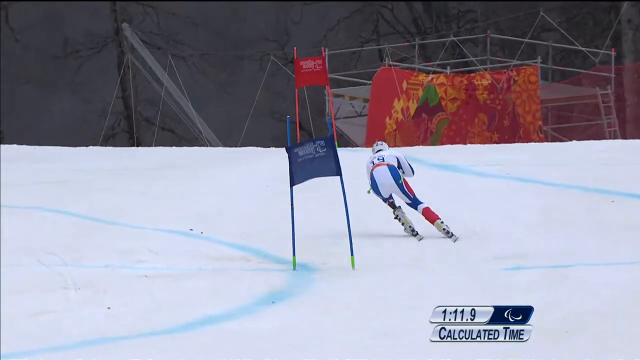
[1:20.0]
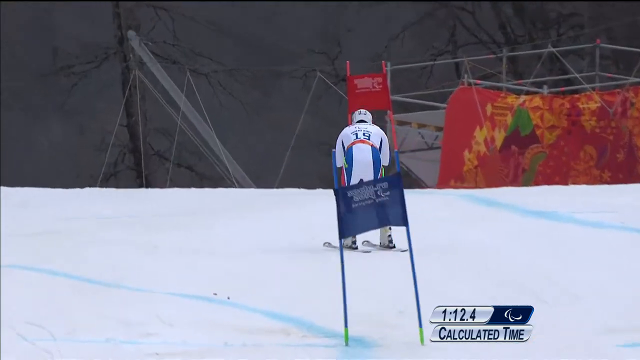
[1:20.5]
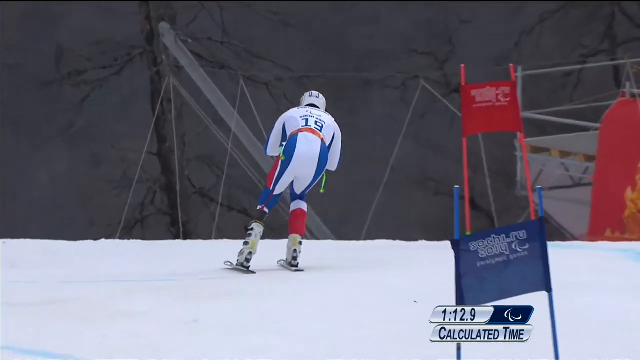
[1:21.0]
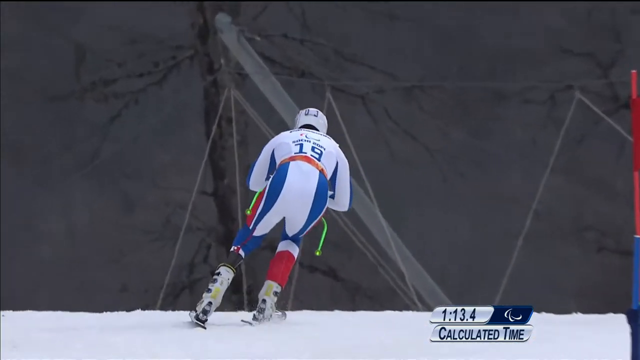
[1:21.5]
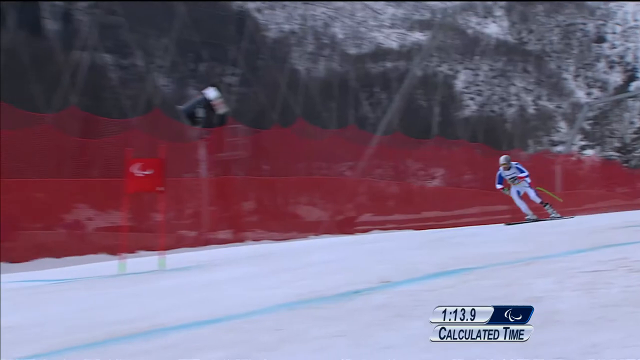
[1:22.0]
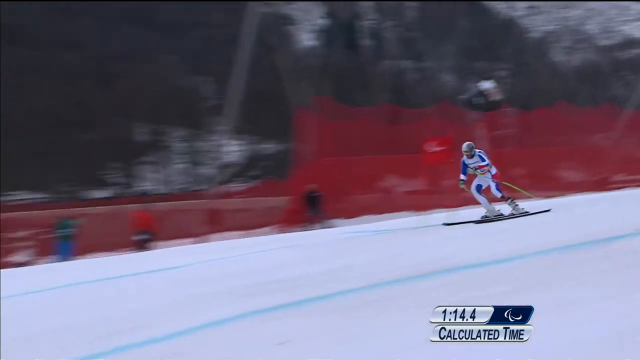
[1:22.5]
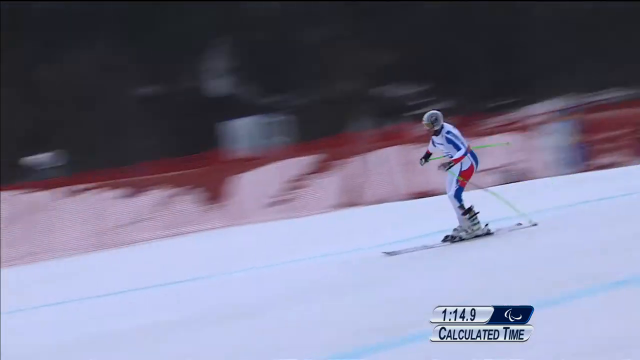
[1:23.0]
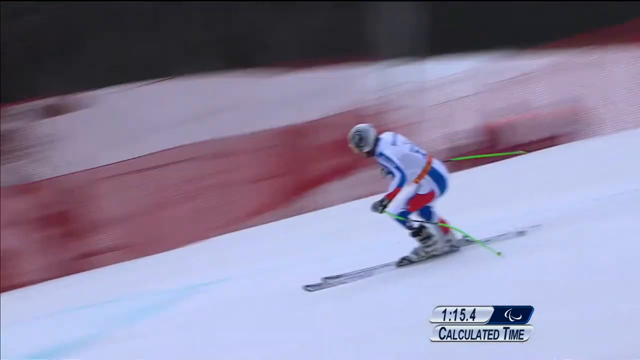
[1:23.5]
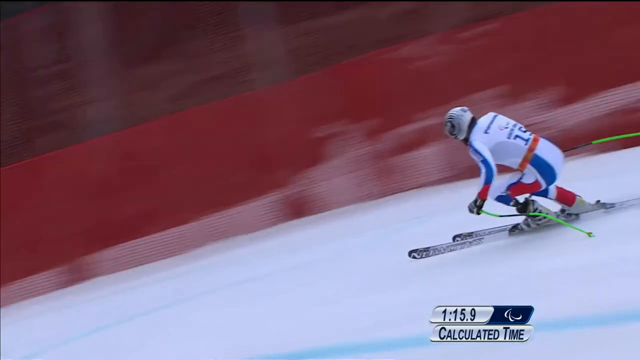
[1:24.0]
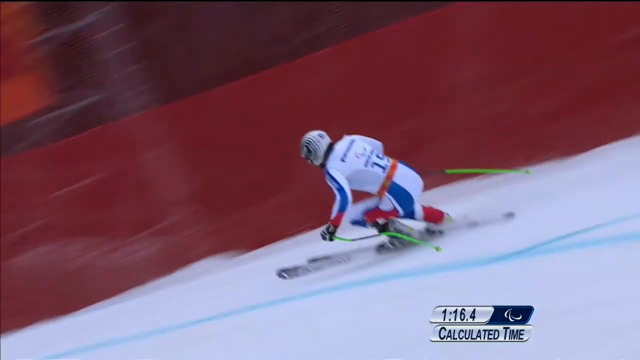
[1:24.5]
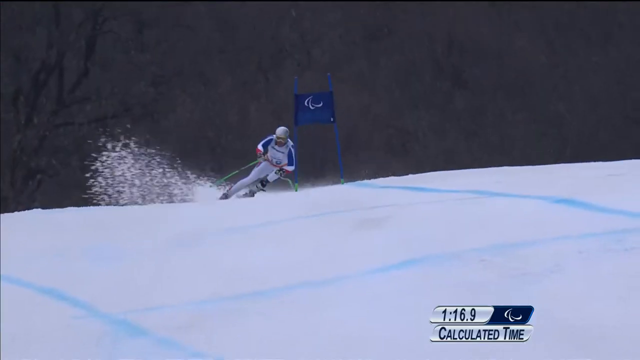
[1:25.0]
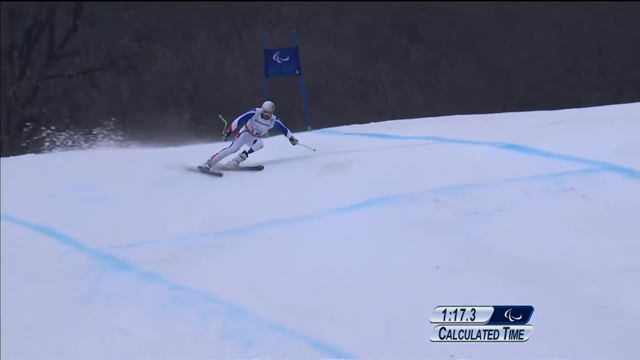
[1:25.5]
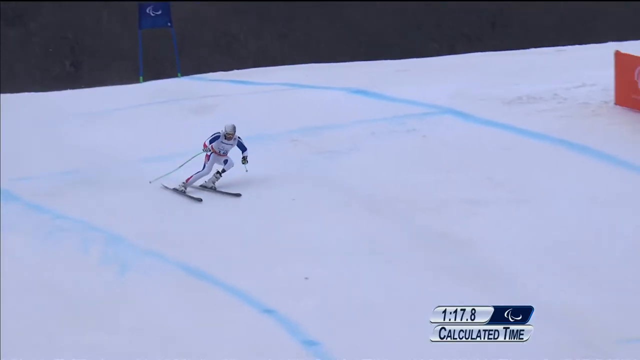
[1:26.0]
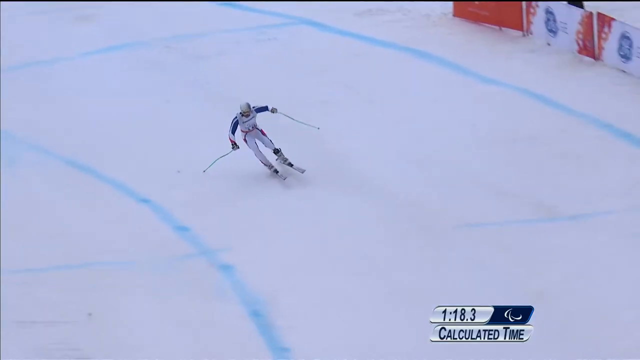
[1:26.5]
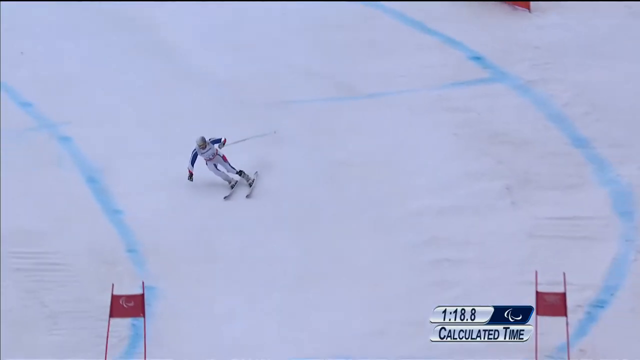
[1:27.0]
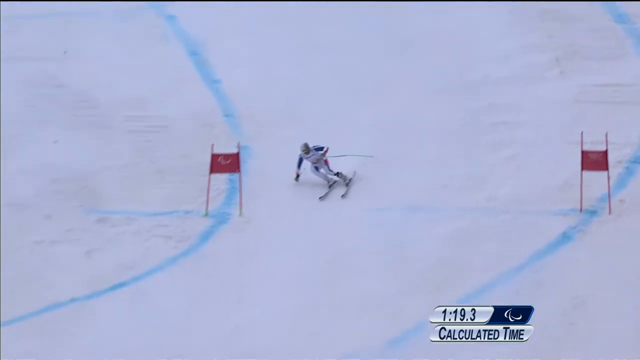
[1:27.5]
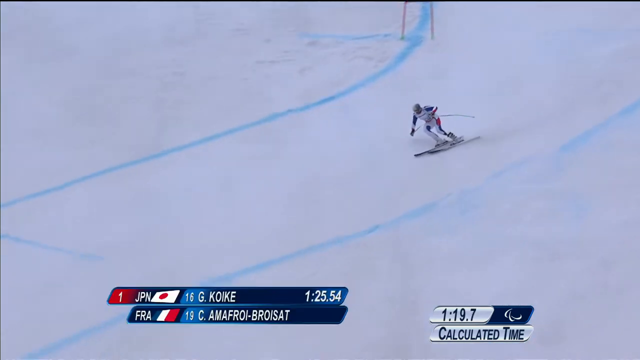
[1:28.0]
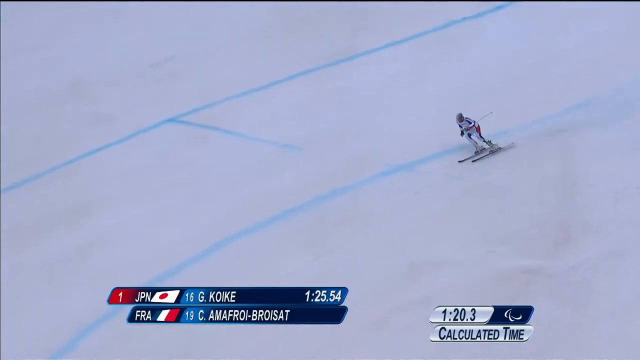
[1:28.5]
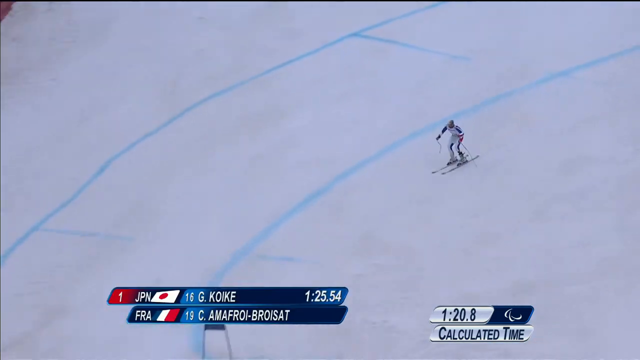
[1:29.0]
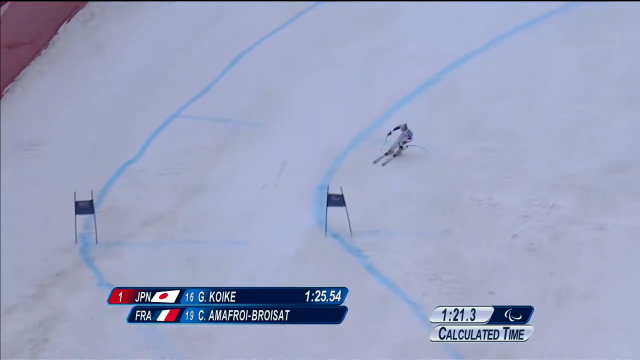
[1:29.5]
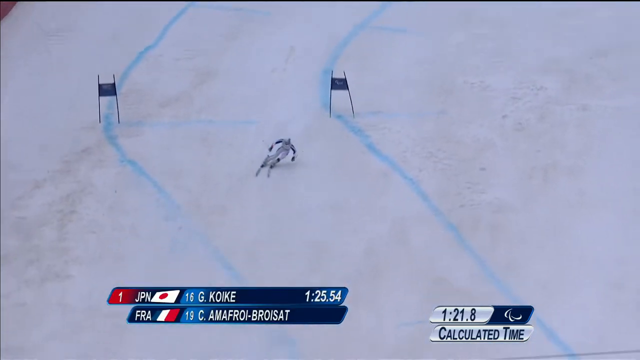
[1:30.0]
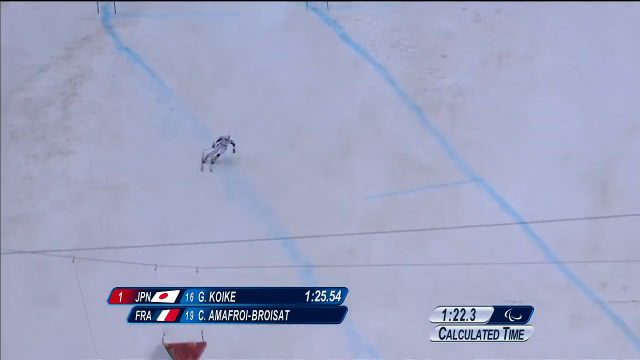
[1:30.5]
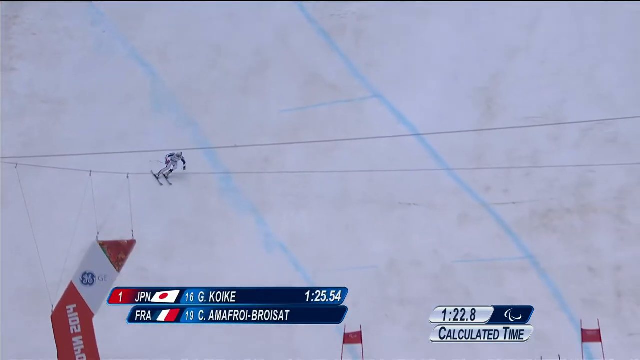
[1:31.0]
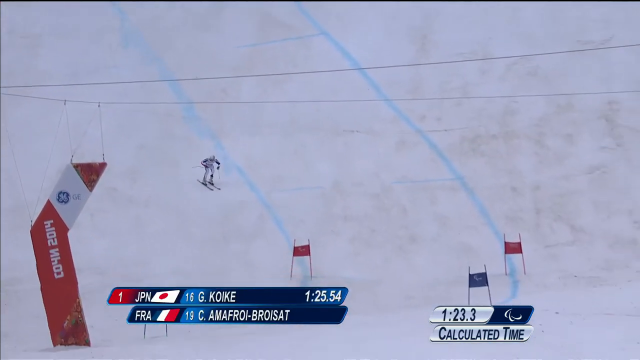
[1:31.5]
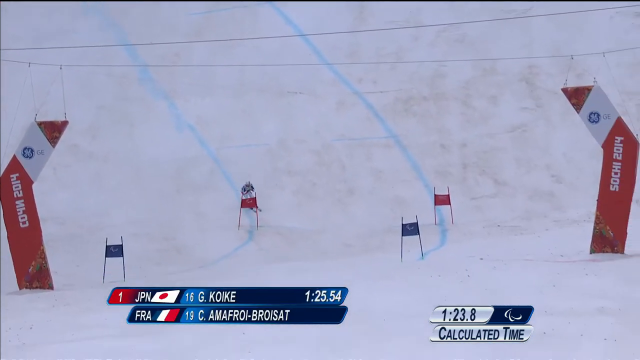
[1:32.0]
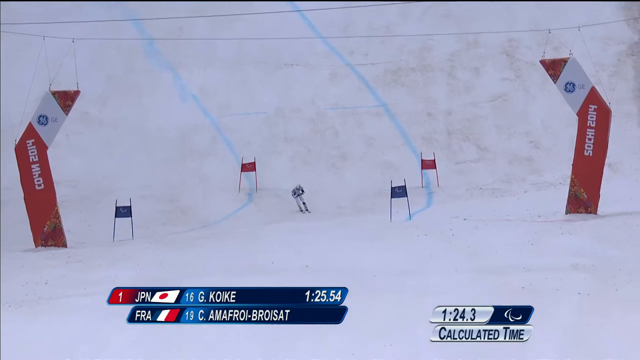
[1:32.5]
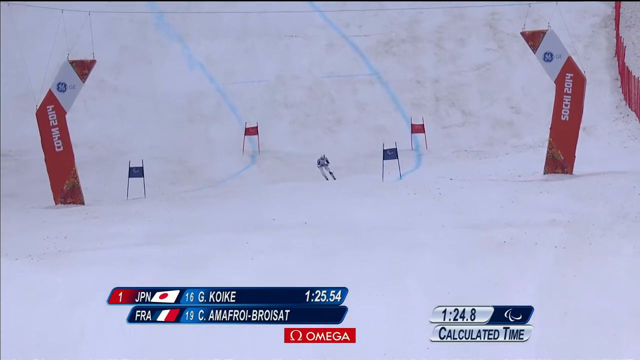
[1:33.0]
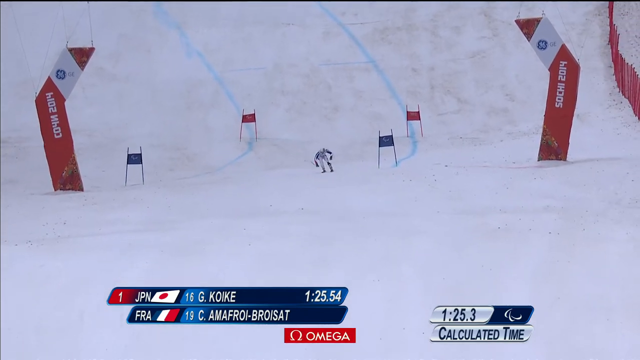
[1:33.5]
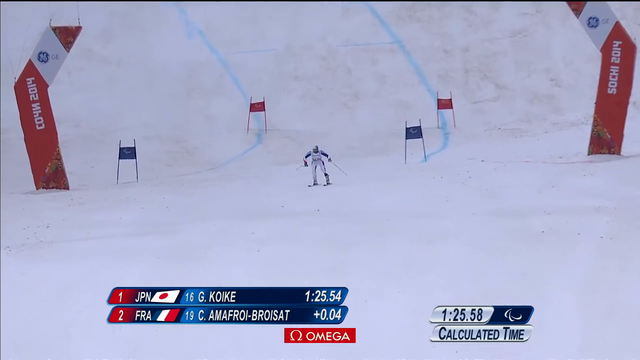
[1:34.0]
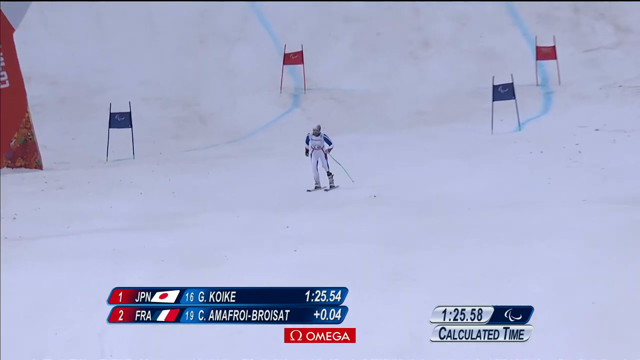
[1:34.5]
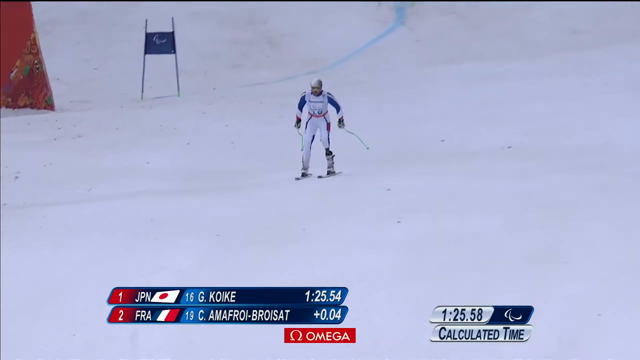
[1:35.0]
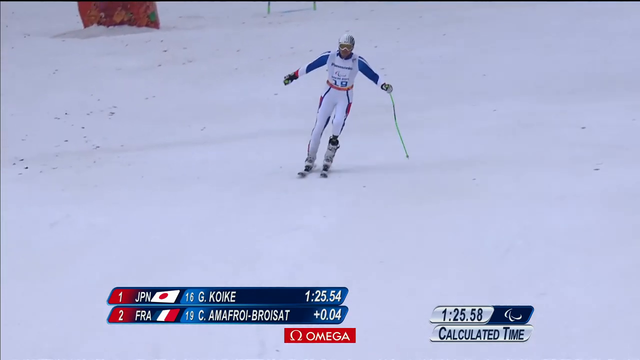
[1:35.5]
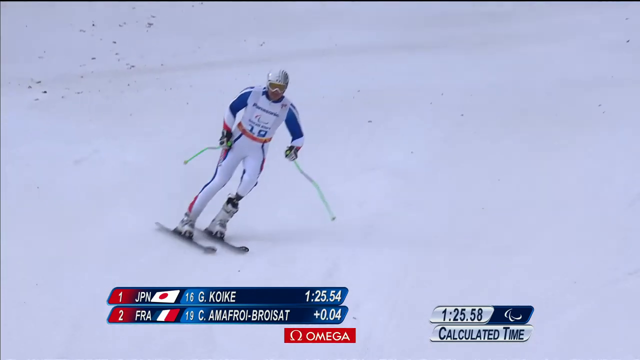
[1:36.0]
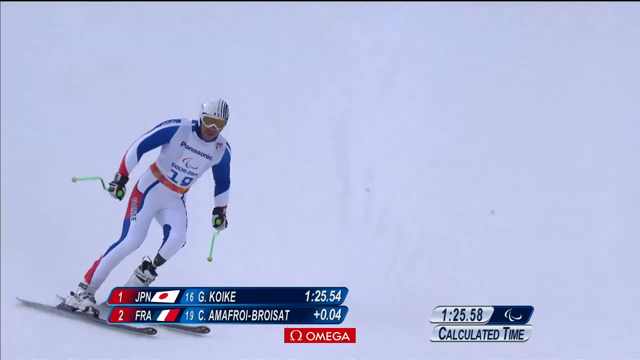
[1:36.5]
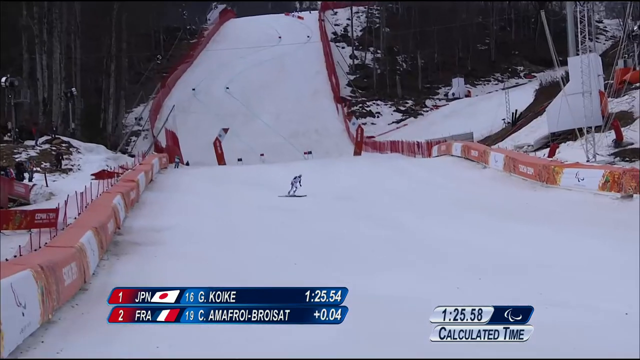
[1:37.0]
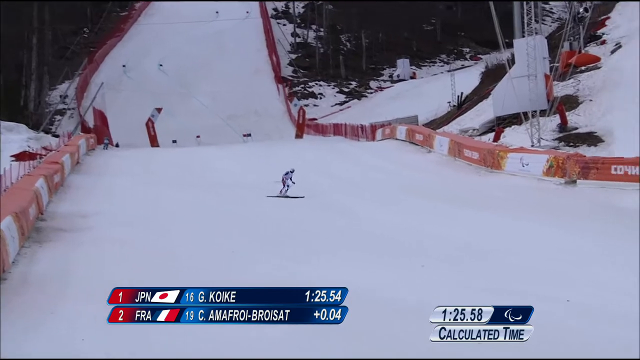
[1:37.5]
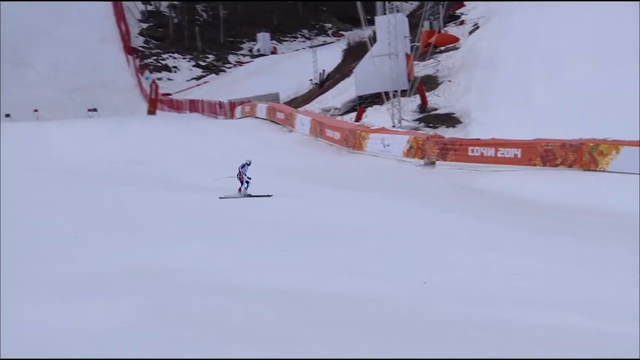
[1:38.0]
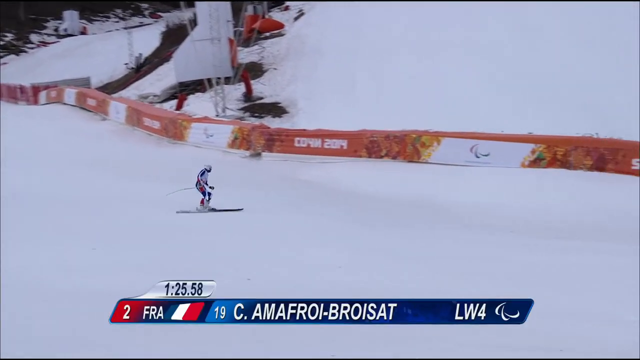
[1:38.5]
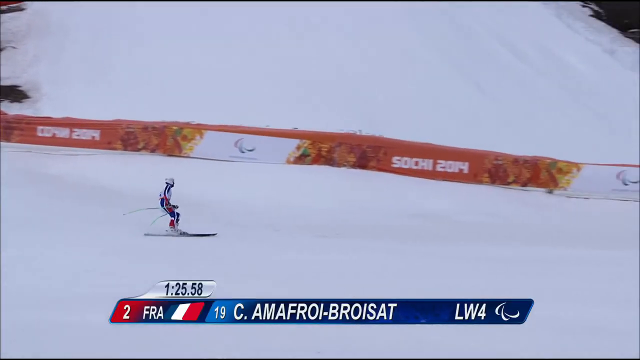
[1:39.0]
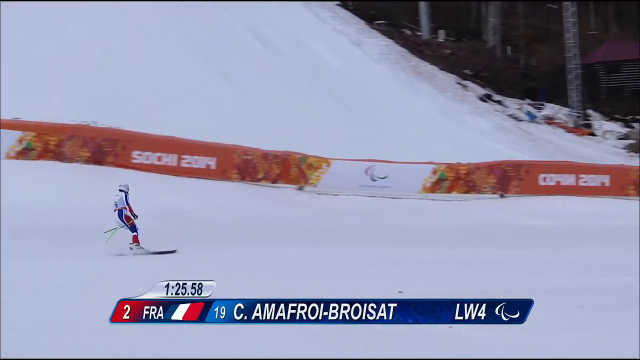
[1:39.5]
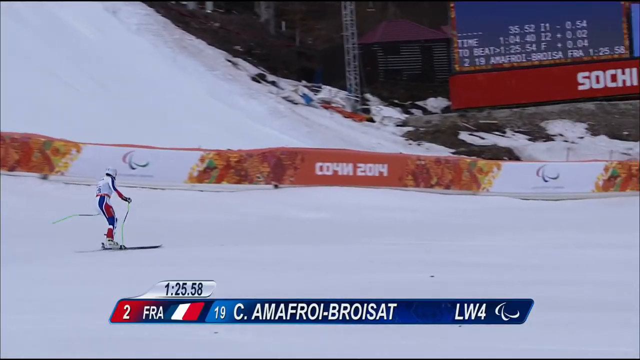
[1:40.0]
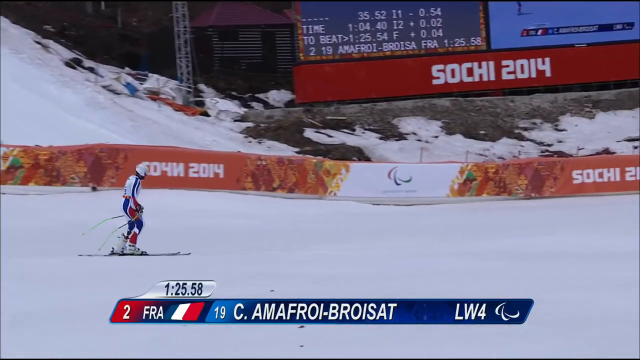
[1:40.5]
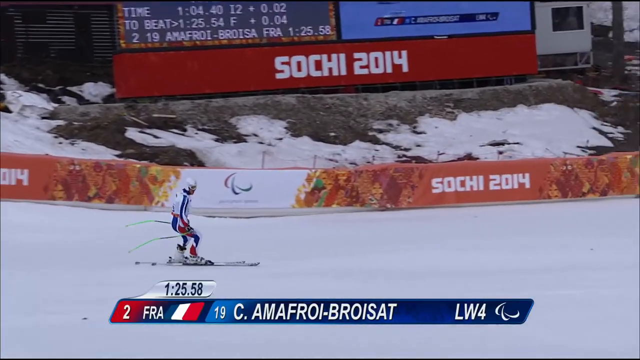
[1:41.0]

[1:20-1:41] The French competitor goes through the last hill. He goes down the hill and carves left, almost out of bounds, and then goes out of bounds of the pathway he is supposed to stay on, apparently three times on this last hill. He continues down the hill and finally reaches the end point. At the bottom he seems a little disappointed as his time is shown to be 0.04 seconds longer than his competitor's.